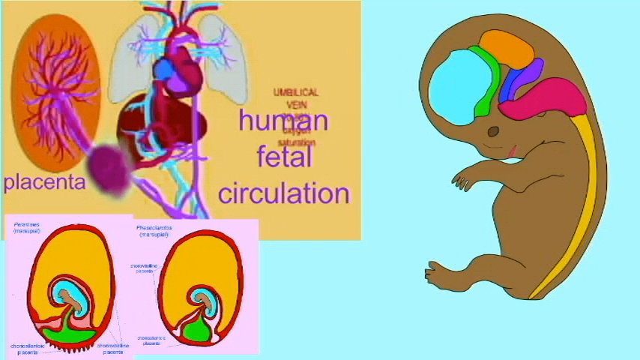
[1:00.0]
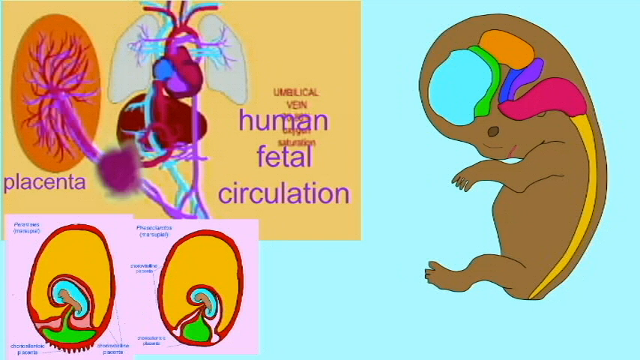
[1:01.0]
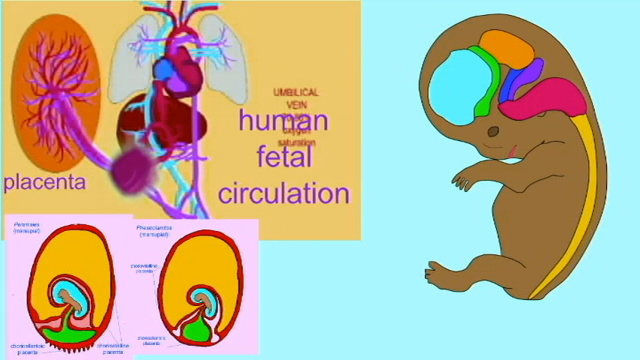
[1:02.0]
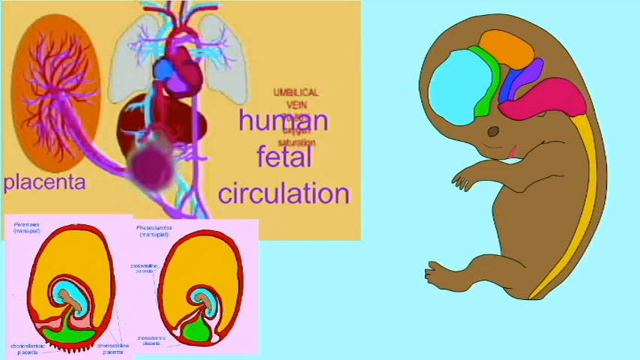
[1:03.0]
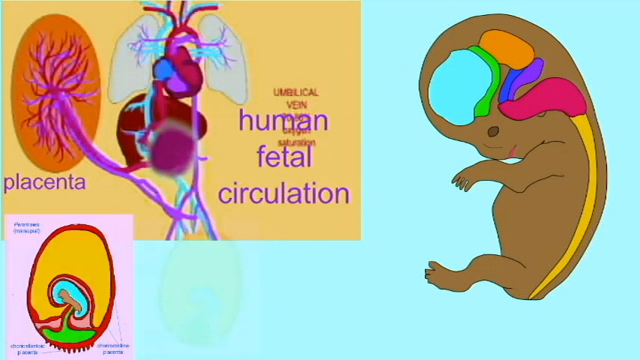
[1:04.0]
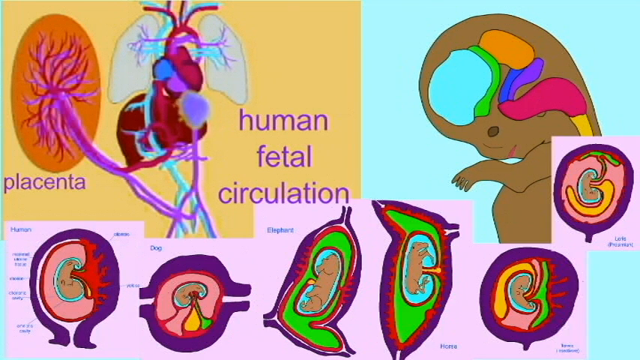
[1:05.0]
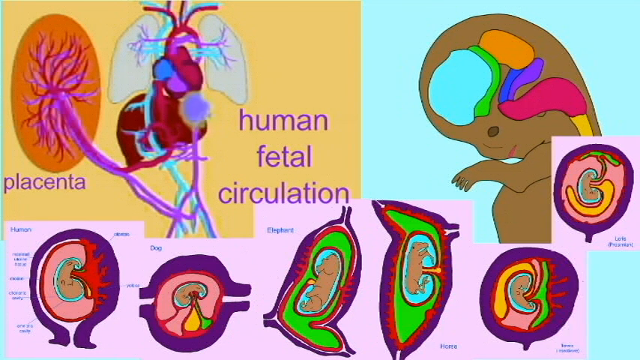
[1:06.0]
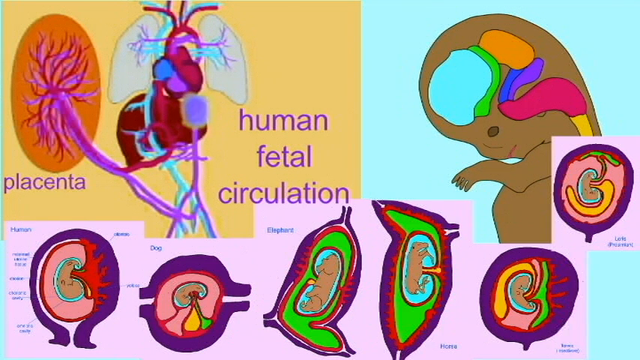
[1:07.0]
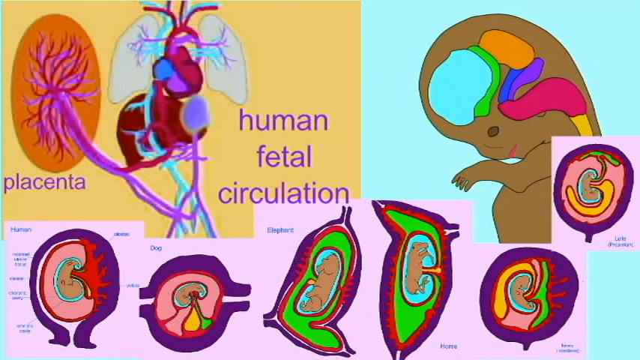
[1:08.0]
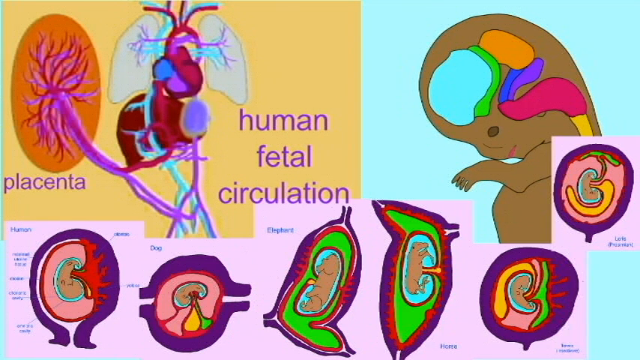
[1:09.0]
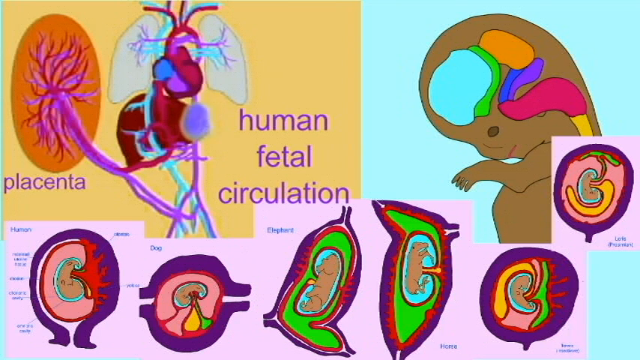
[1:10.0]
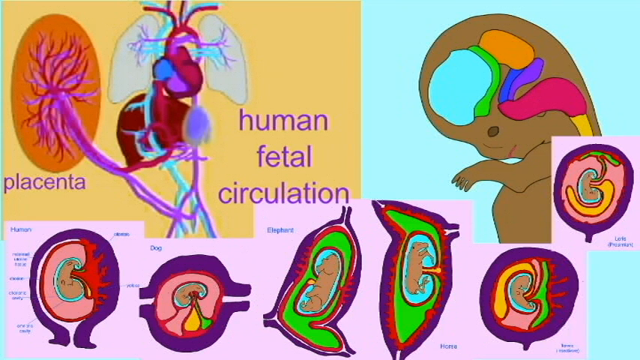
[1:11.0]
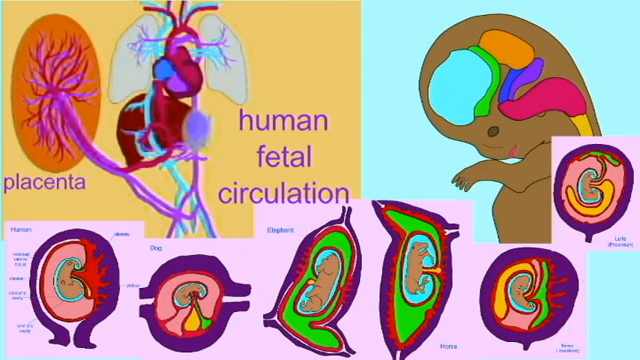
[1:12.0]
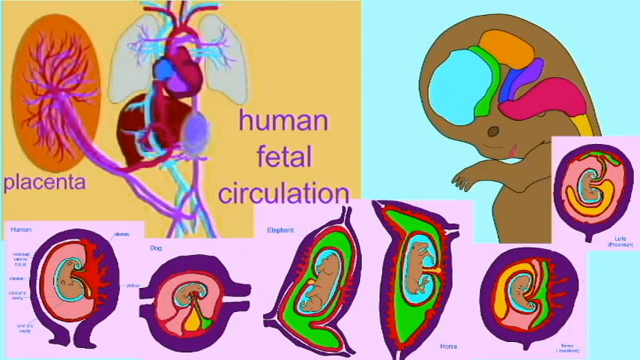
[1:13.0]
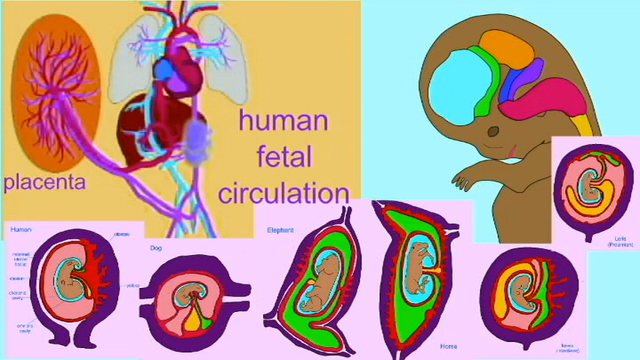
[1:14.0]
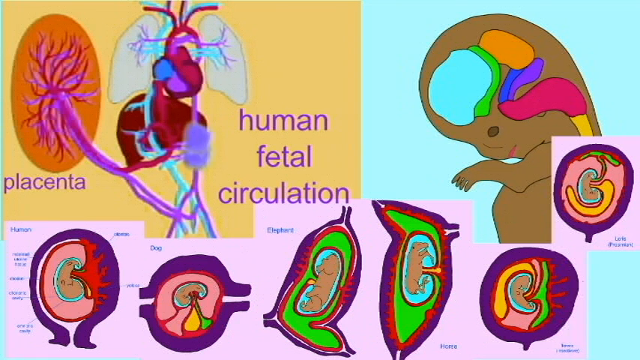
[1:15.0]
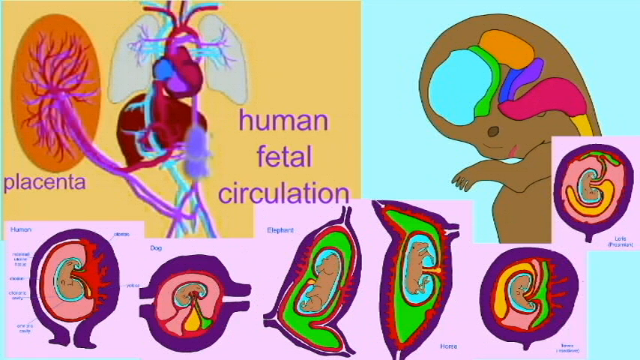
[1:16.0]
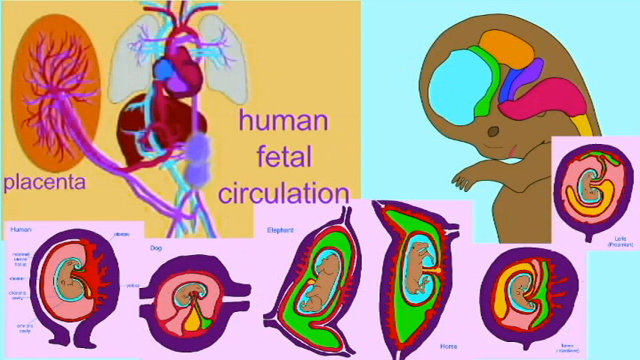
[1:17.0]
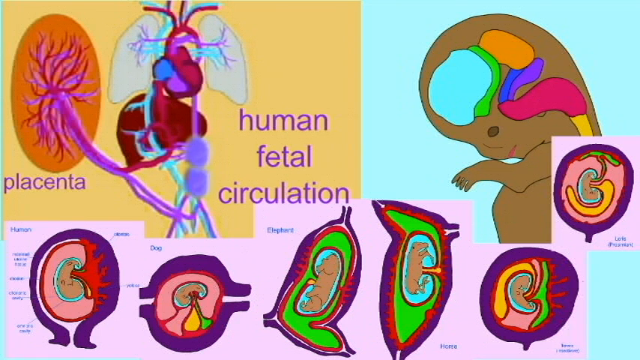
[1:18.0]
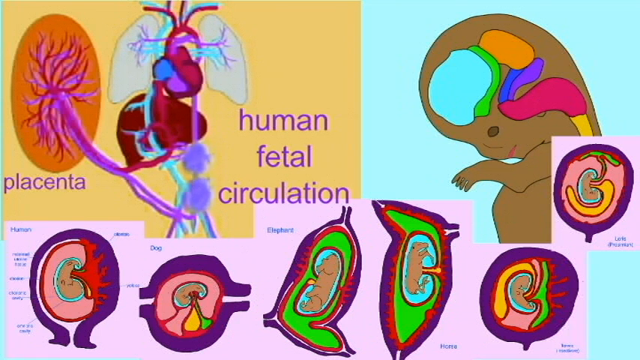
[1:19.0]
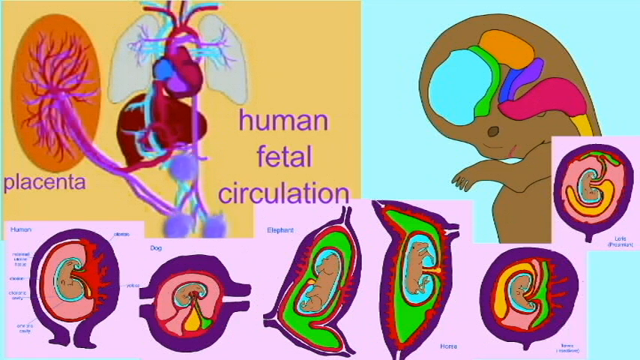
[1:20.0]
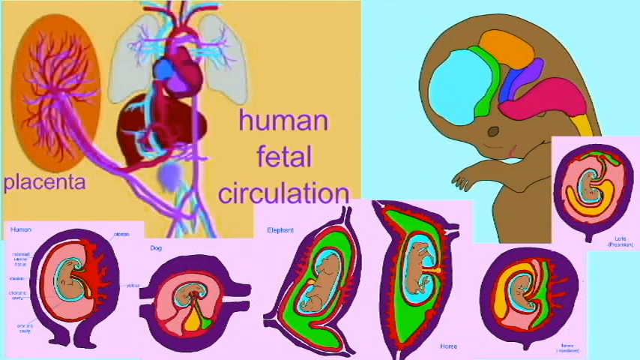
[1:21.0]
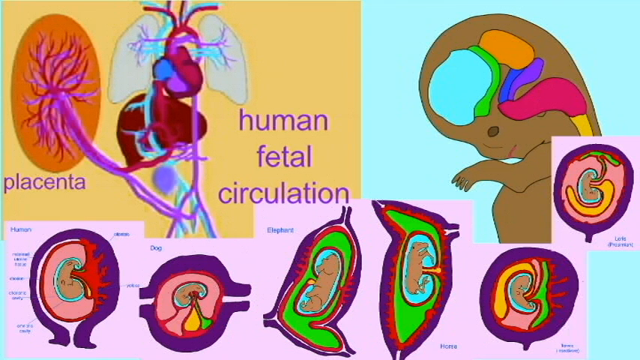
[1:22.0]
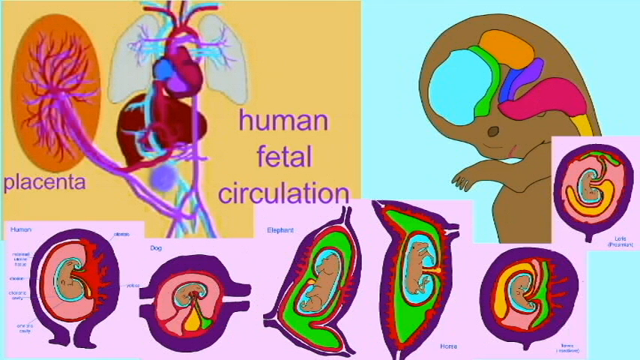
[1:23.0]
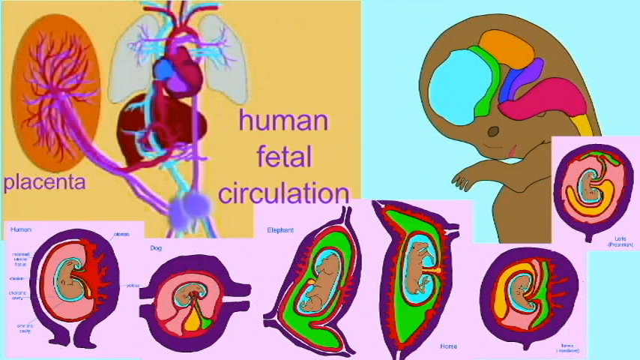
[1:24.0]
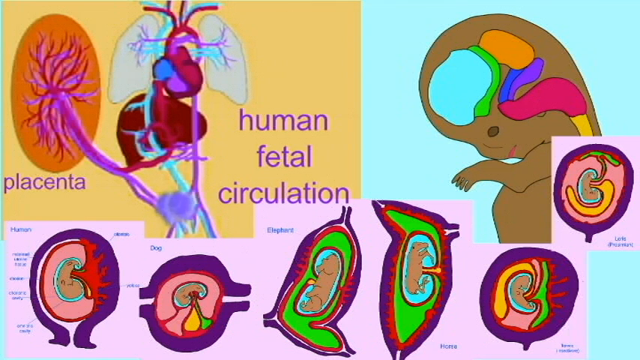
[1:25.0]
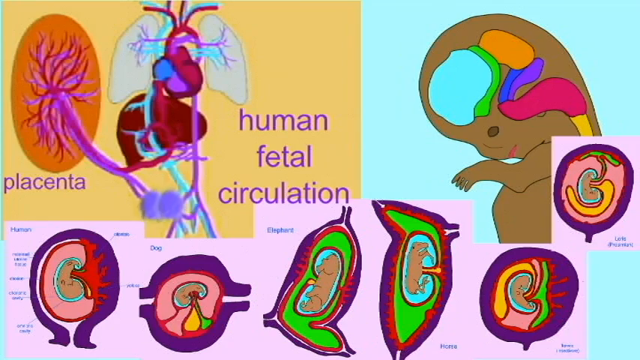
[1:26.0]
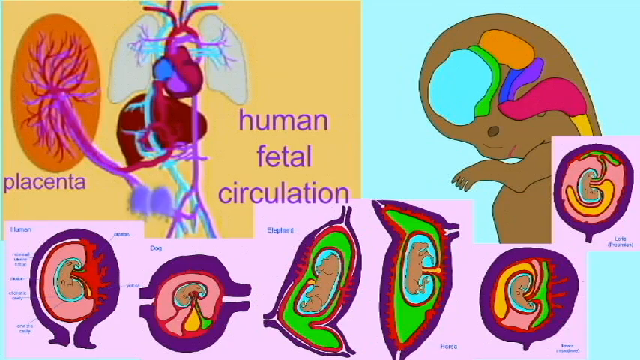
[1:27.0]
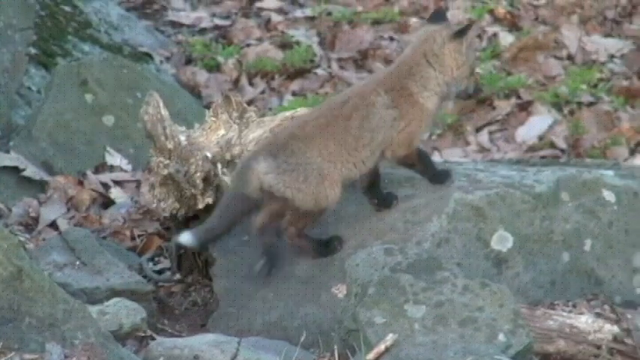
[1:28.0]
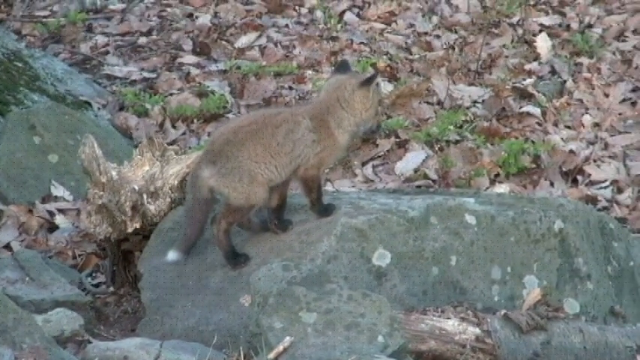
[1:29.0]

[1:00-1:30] The maroon blob continues and completes its movement from the placenta toward the central circulation, while three purple blobs make the same movement as before from the central circulation. One of the blobs goes back to the intermediate intersection of the placenta and stops about halfway without reaching the placenta, while the other two go further down the circulation, to what is basically the circulation of the legs. Then at least three sets of placenta diagrams appear, each as a pair, showing the structure of placentas in different animals. One is labeled as an elephant placenta, another a dog placenta and one a human placenta; the other two cannot be identified because the text is very small. The video then quickly transitions to what appears to be a young fox in its habitat, seemingly exploring.